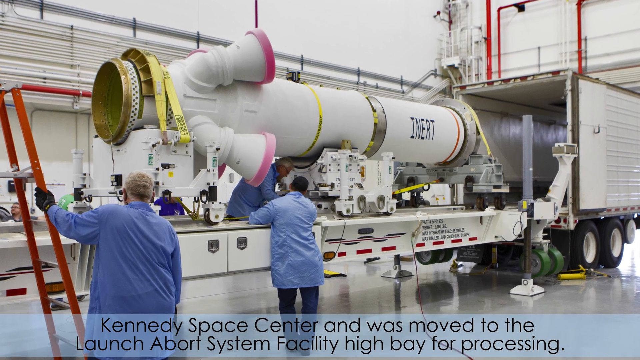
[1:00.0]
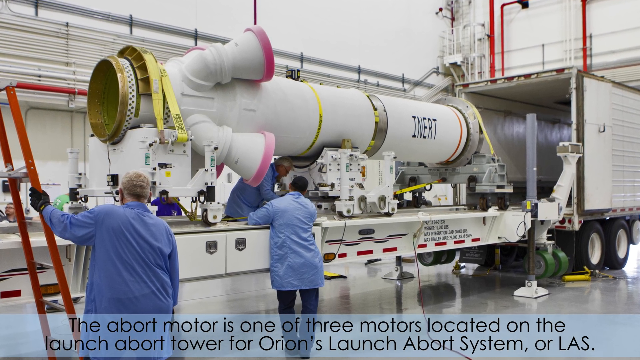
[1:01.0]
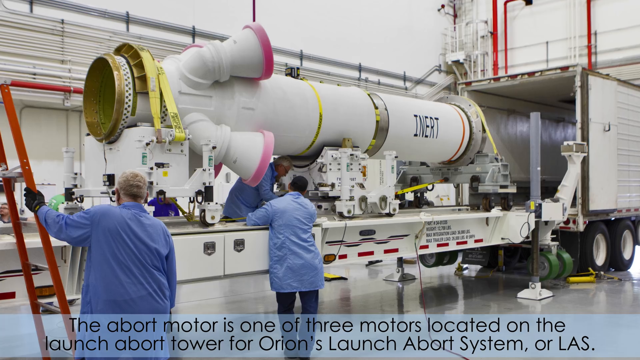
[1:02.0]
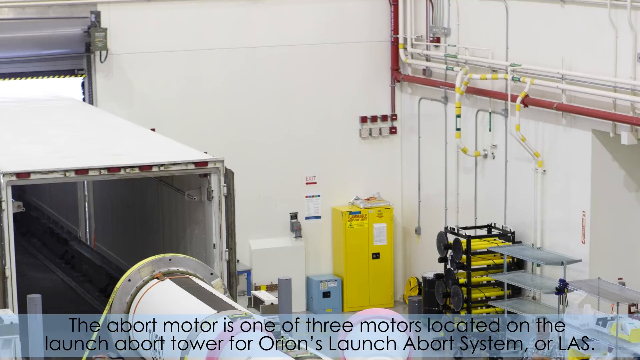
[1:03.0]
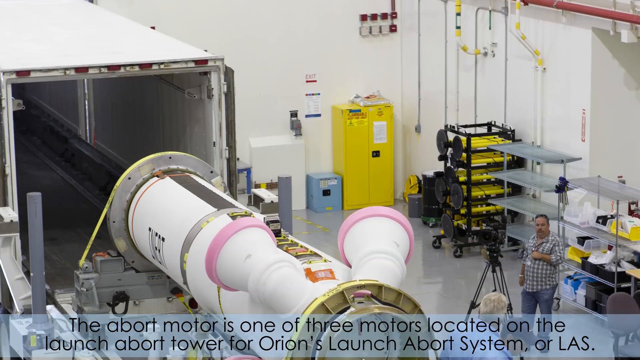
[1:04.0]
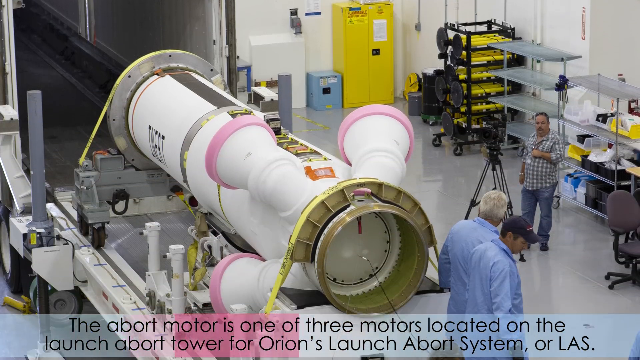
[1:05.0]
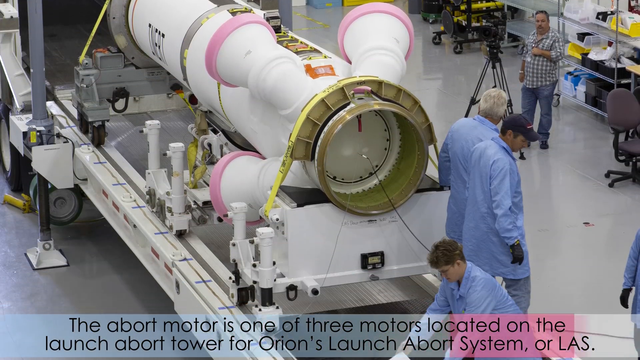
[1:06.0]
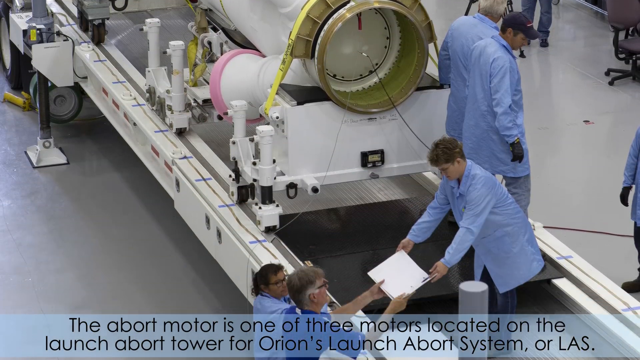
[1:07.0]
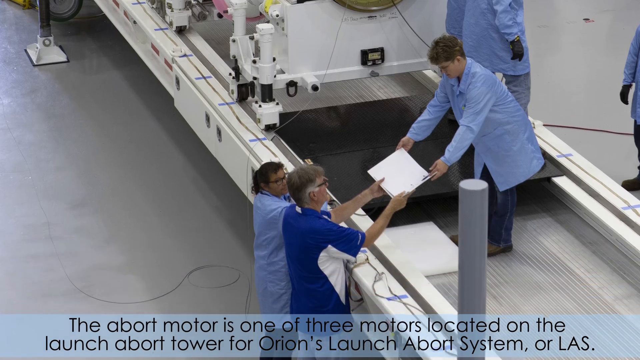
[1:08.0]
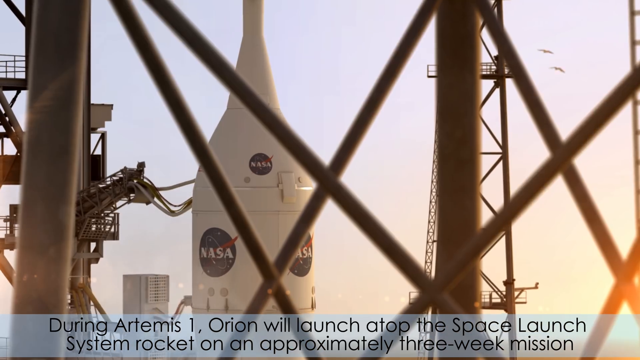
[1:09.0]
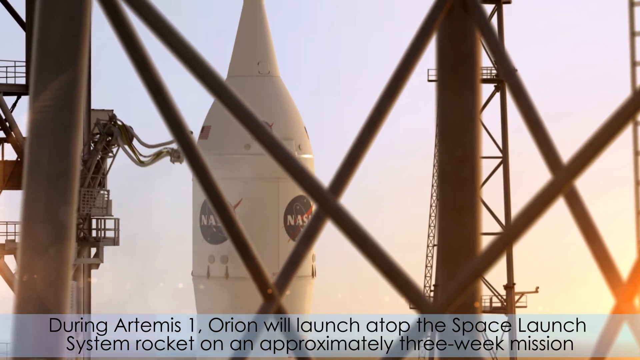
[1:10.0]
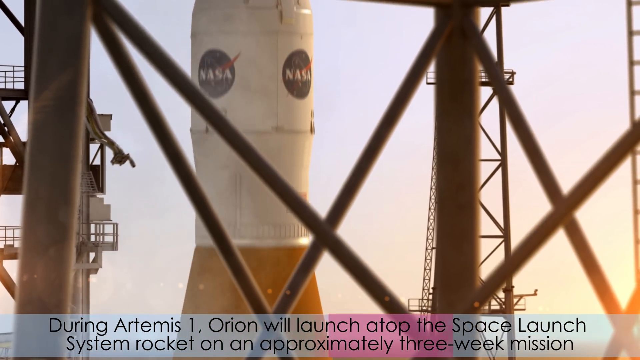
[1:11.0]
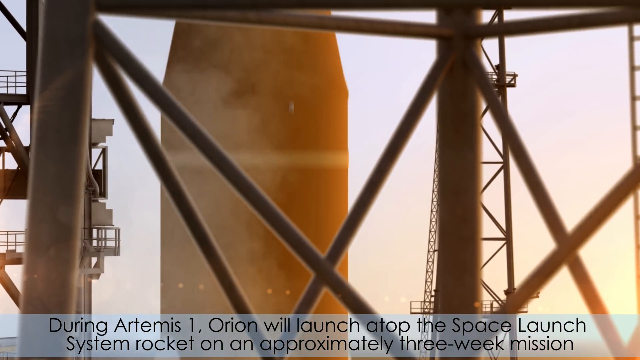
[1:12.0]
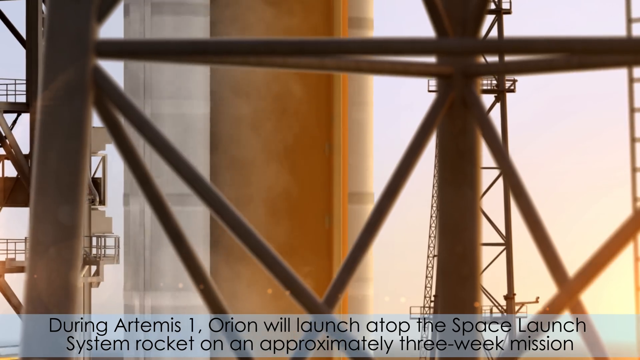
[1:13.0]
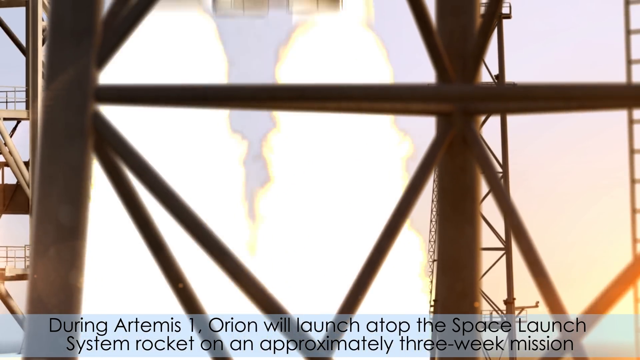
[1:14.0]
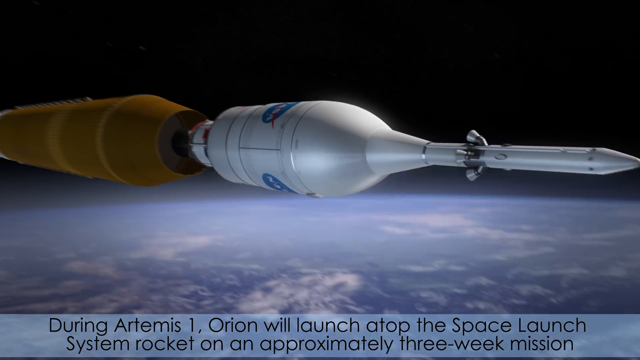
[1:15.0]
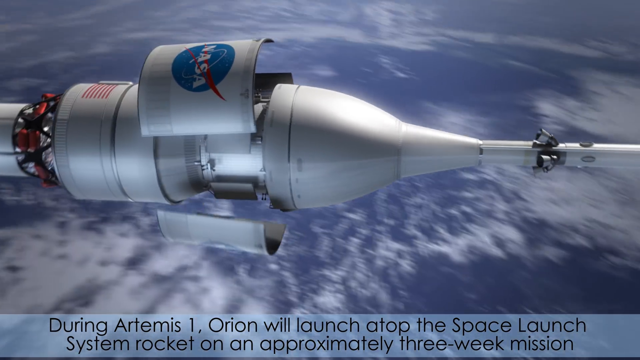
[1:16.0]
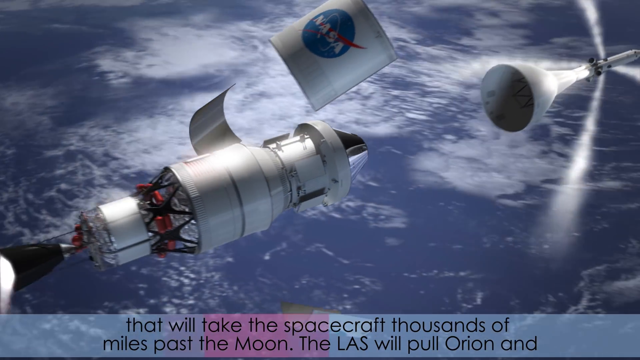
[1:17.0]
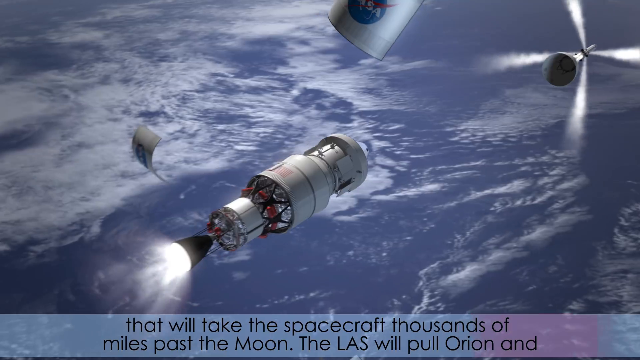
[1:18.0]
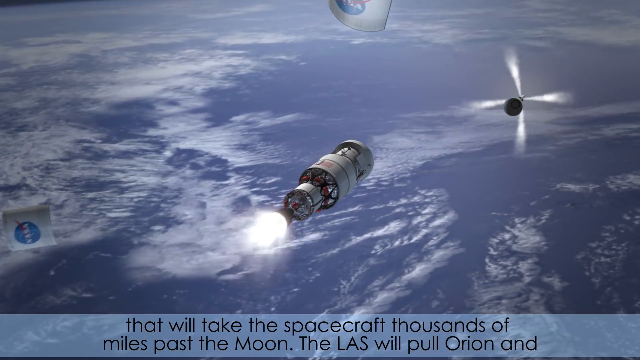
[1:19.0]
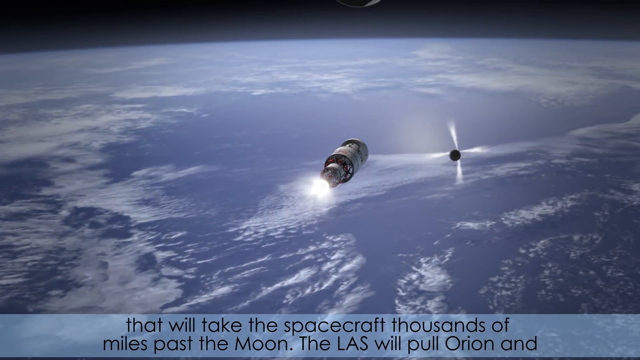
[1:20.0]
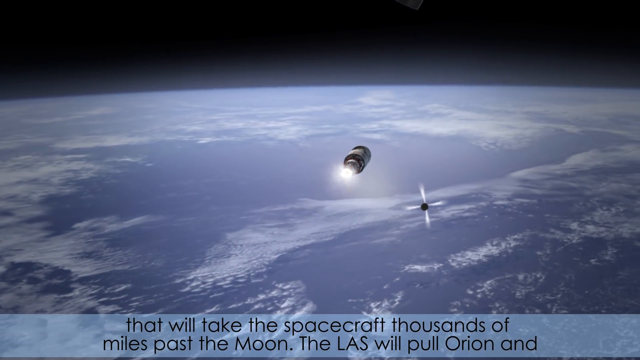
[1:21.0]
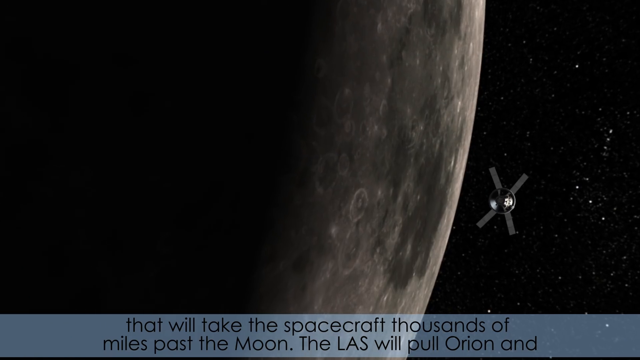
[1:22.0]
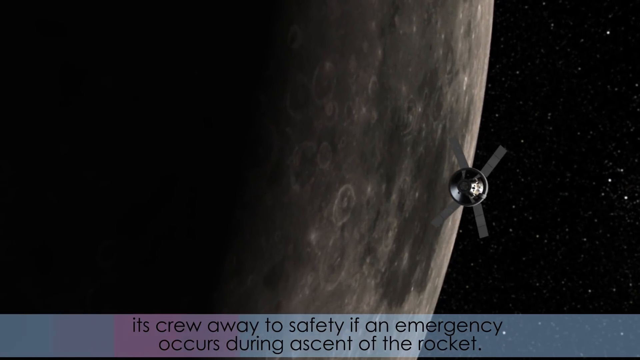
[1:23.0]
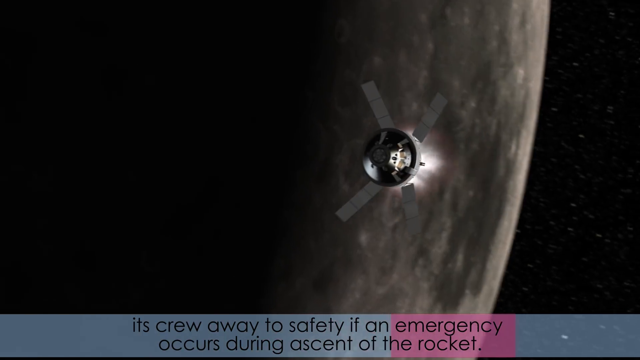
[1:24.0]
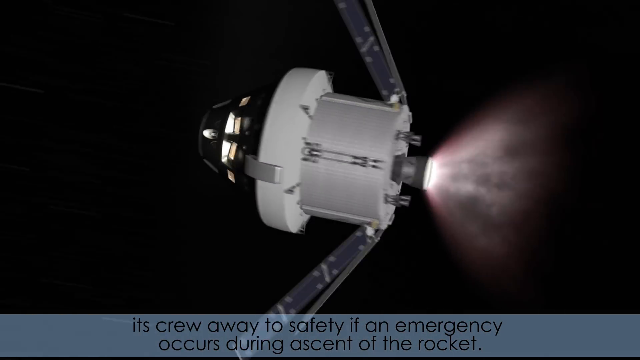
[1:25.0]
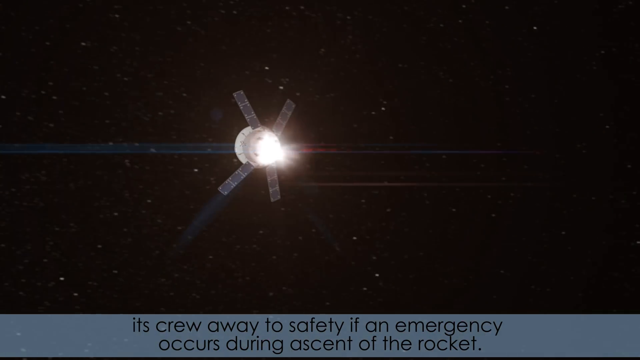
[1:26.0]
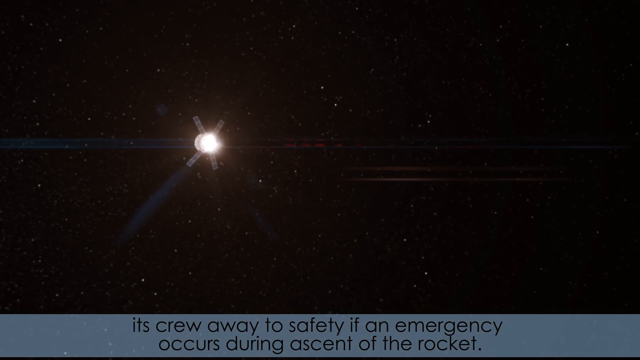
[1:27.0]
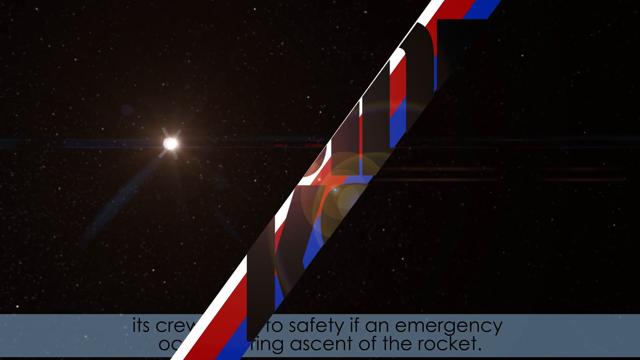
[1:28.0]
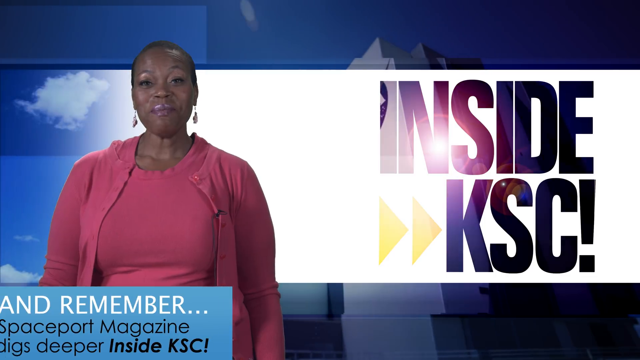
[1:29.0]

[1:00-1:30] The motor is on the flatbed. Another image starts up high looking at a wall, and the camera pans down fairly quickly to the INERT motor, possibly a different angle of the same shot. The tube is perhaps 15 to 20 feet long, with a diameter of perhaps three and a half or four feet. The setting is indoors, with a hard floor visible, and several workmen stand around; several wear light blue coats that go down to their thighs, and one has a baseball cap. Text at the bottom reads "Abort motor is one of the three..." and continues at length. Many of the screens are captioned; the next one reads "During Artemis 1, Orion will launch atop..." and continues. Then comes actual video, apparently real footage of the launch of a NASA rocket, seen at its top through the structure holding it up. The NASA logo is on the top of the rocket and the US flag on the side, and the long rocket launches upward. A clearly digitally produced outer-space scene follows, showing portions of the rocket pulling away from it and what might be a capsule zooming past a planet out into the dark.